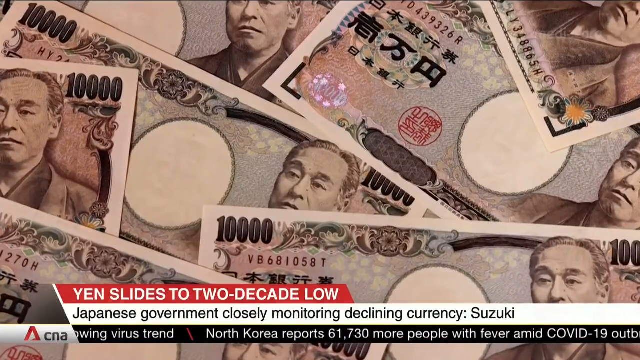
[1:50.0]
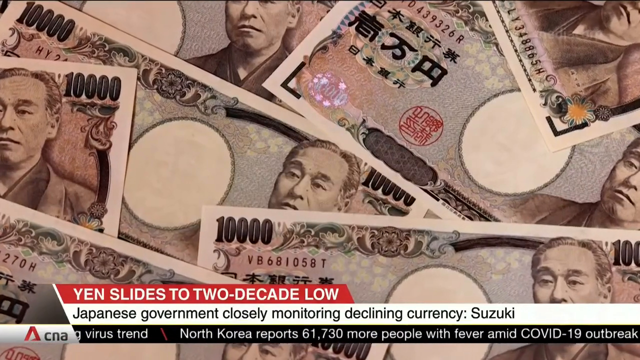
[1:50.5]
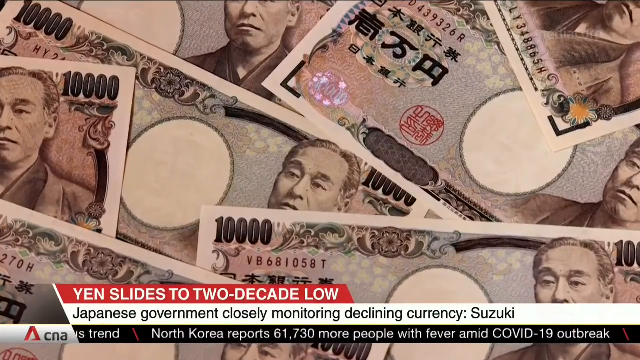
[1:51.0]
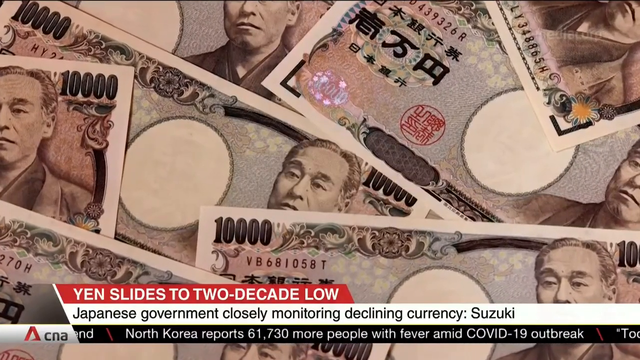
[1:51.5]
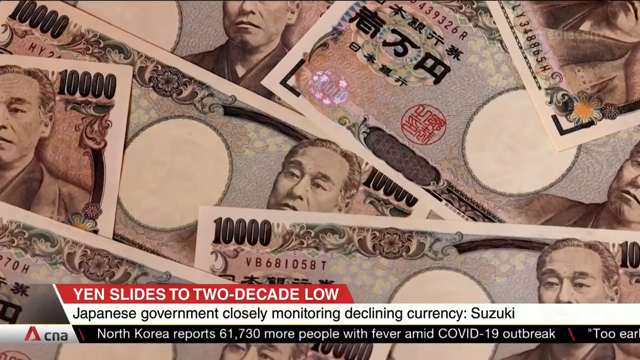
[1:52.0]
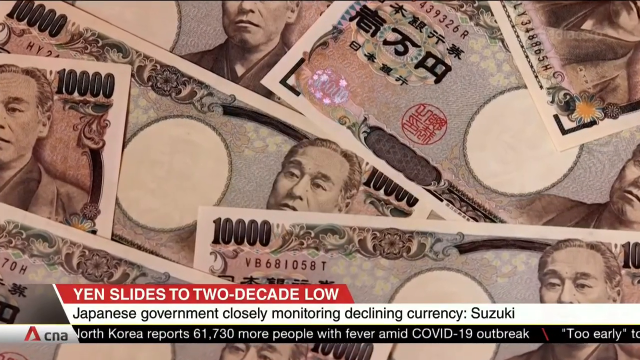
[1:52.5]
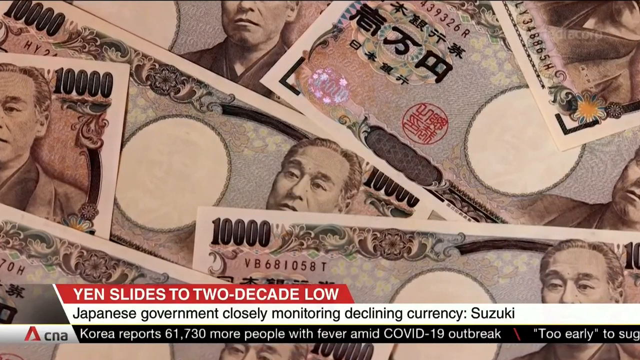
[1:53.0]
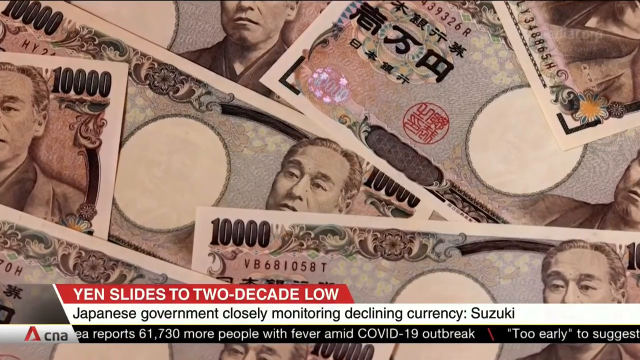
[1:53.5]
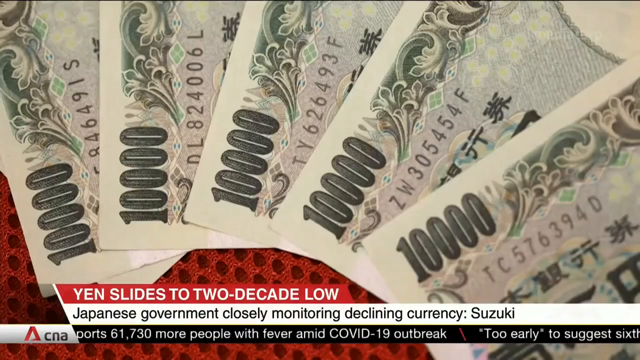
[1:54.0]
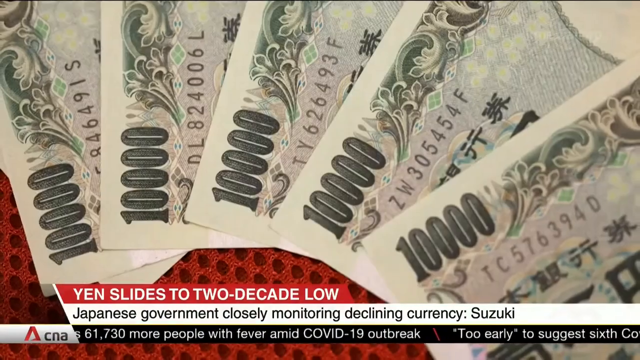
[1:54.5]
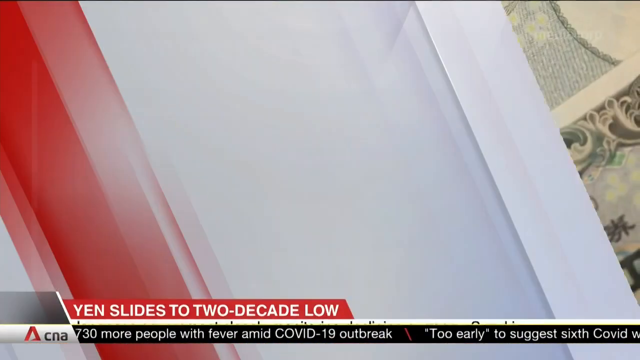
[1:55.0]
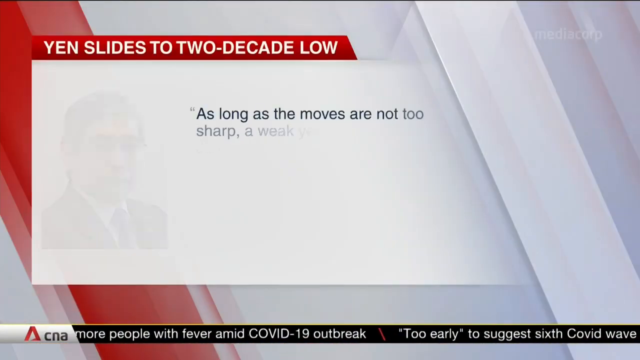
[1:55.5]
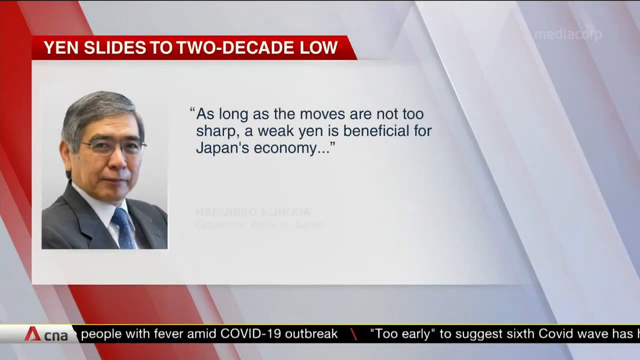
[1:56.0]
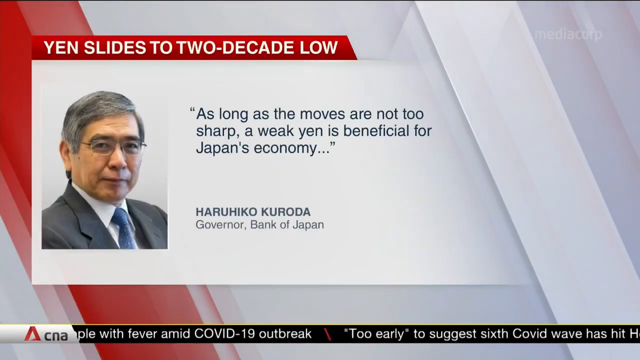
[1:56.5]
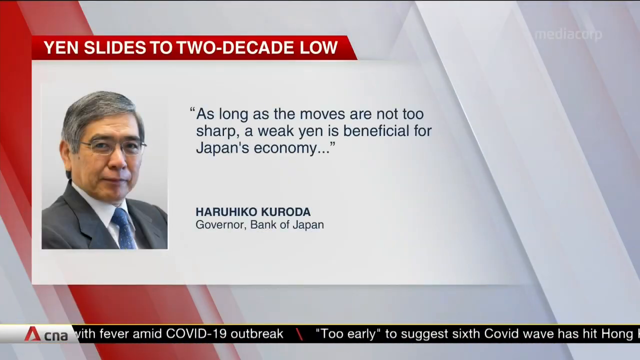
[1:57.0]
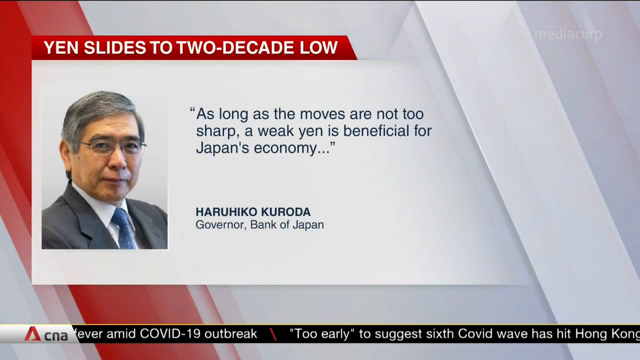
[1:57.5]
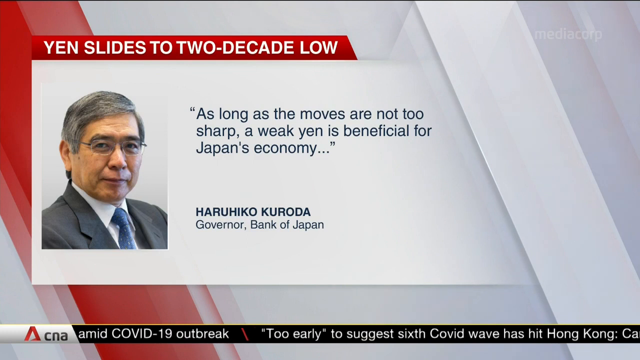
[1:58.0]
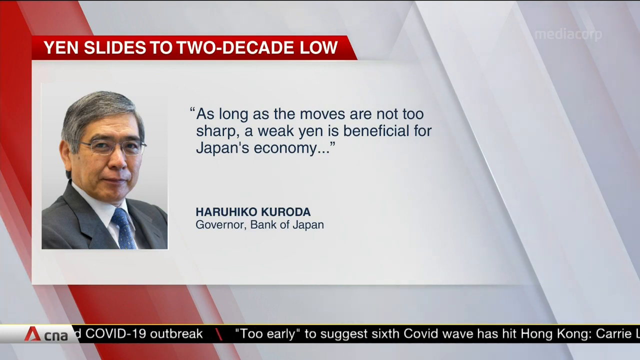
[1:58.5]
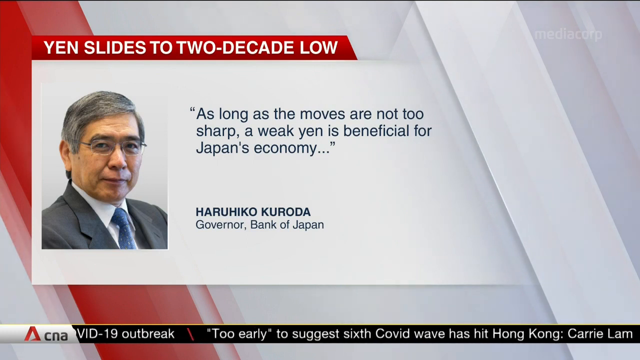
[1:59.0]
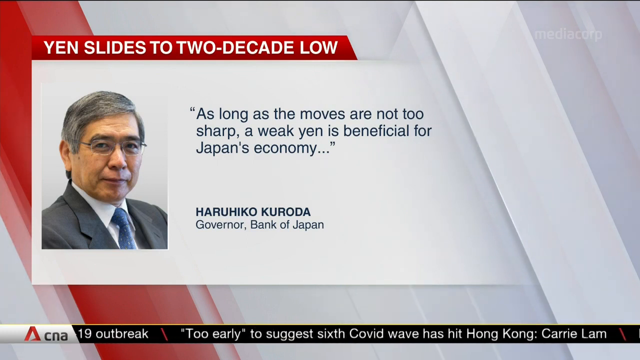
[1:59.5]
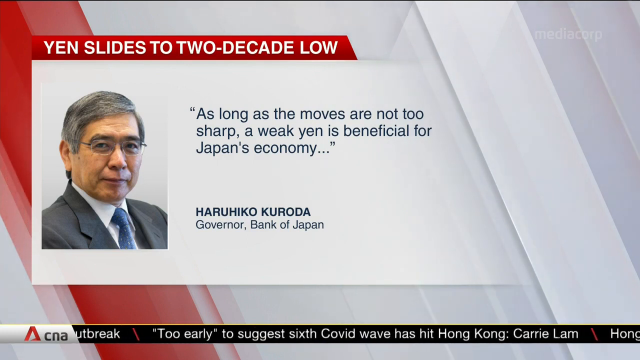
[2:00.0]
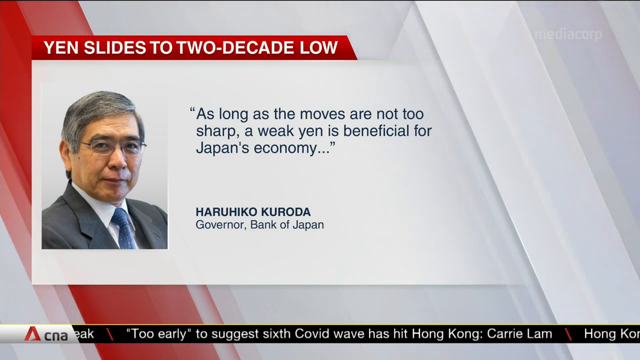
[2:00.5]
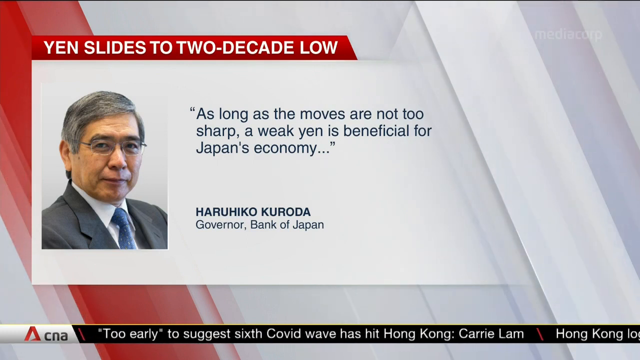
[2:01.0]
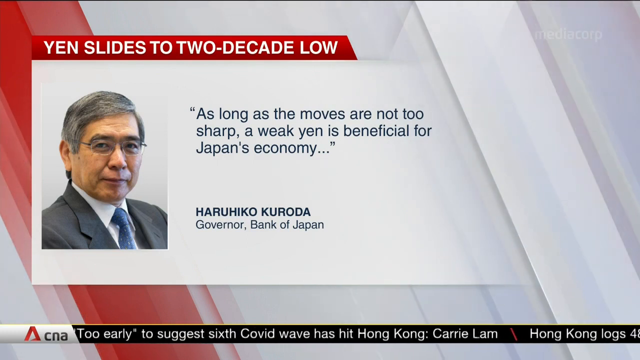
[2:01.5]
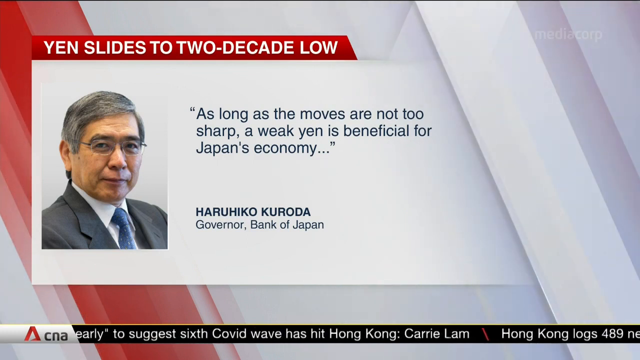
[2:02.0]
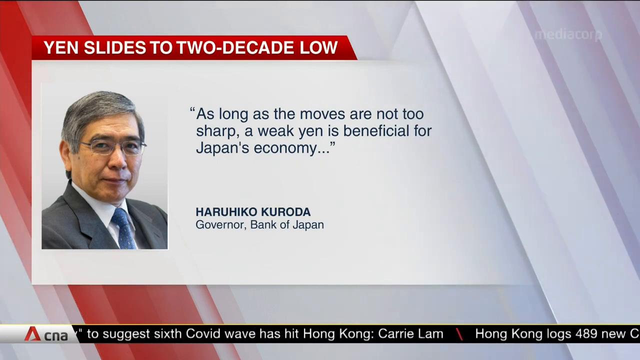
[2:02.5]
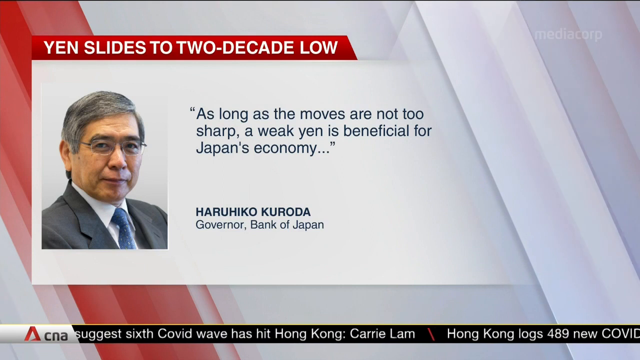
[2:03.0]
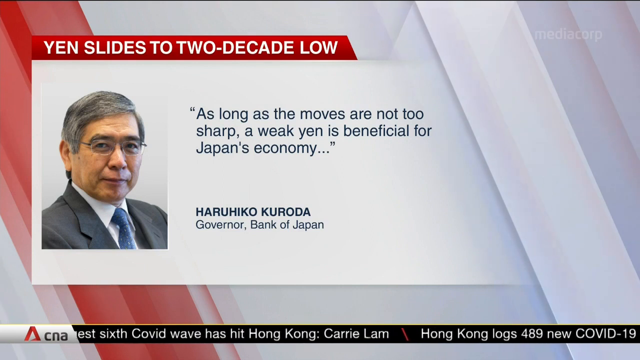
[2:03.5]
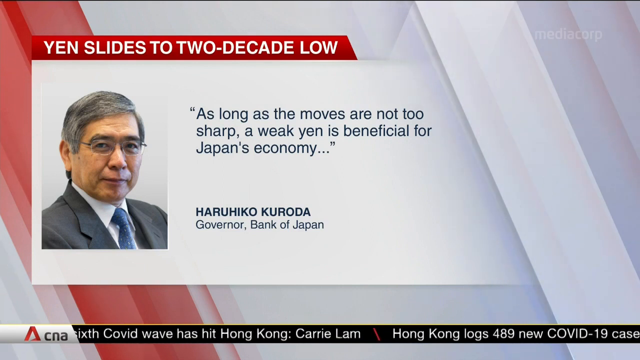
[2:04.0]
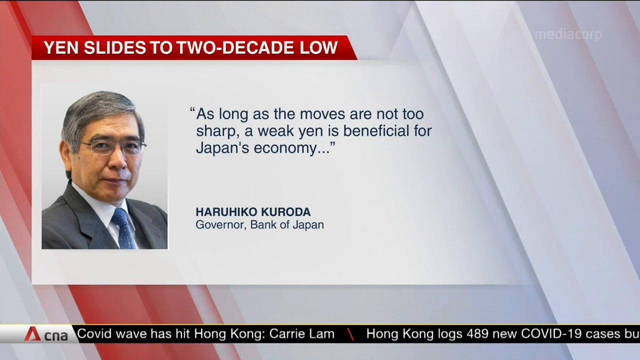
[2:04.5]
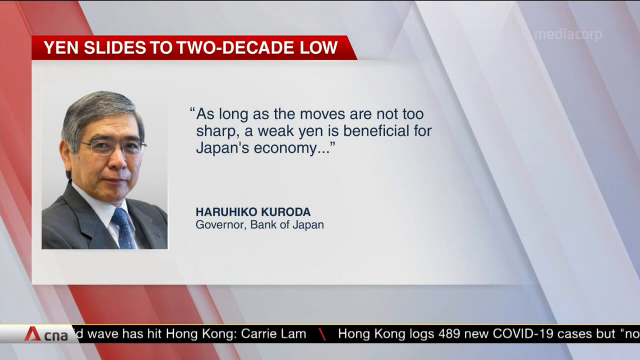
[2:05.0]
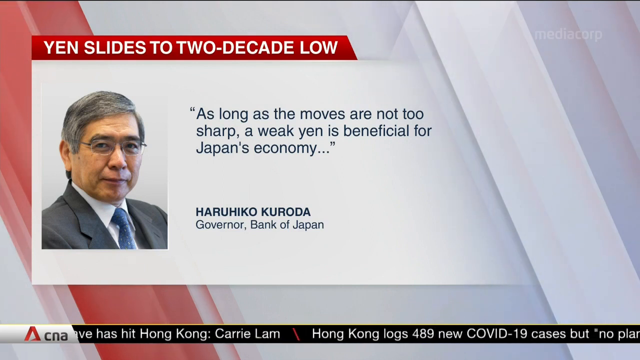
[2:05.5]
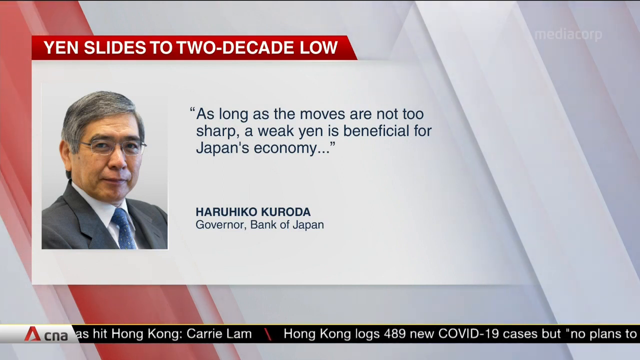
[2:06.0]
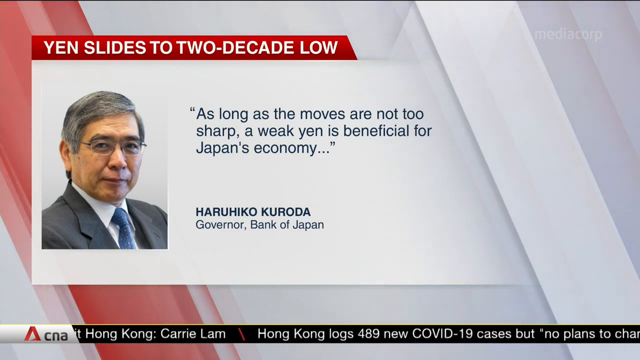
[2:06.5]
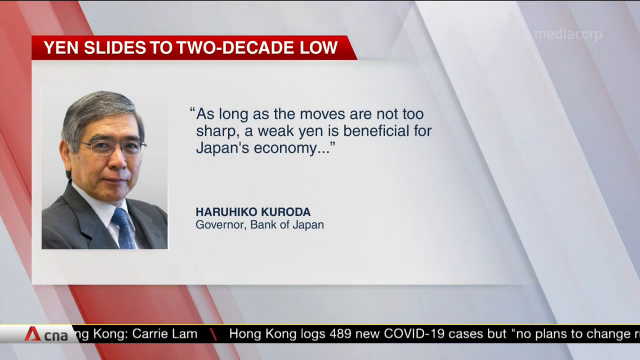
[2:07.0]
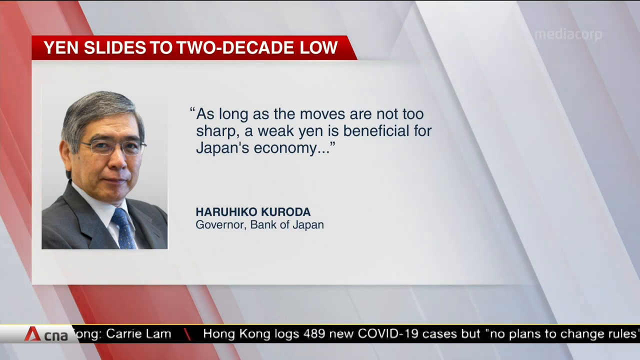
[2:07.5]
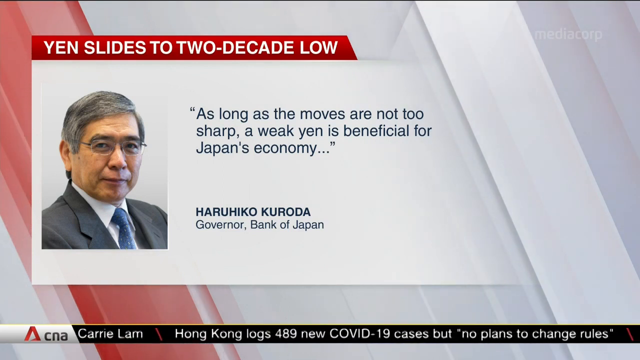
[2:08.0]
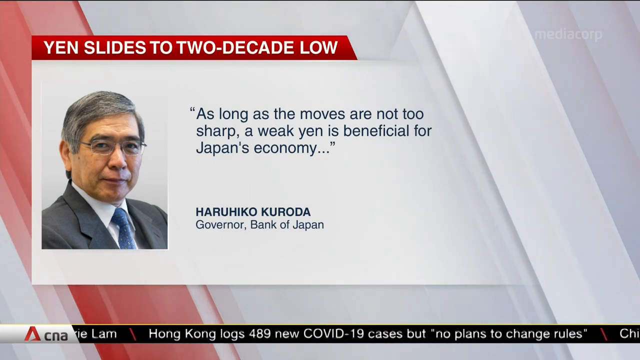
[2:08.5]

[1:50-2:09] Many 10,000 yen bills are shown, and at the top, on a red background in bold white font, text reads "yen slides to two decade low." Beneath it is an image of a man who appears to be the governor of the Bank of Japan, with salt-and-pepper hair, maybe in his 70s. Only the top of his suit is visible, which looks dark, with a bluish white tie and a collared shirt. A quote from him in navy blue reads "As long as the moves are not sharp, a weak yen is beneficial for Japan's economy..." After some space, his name appears in all capital letters: "HARUHIKO KURONE."